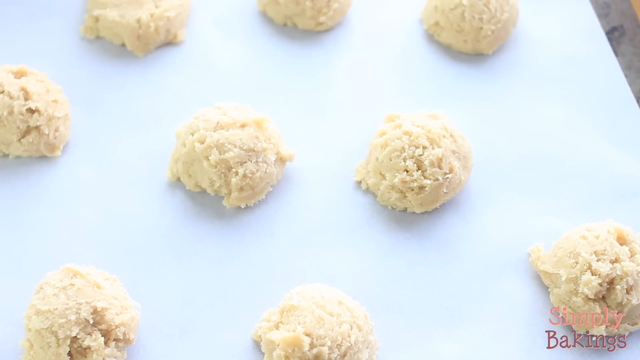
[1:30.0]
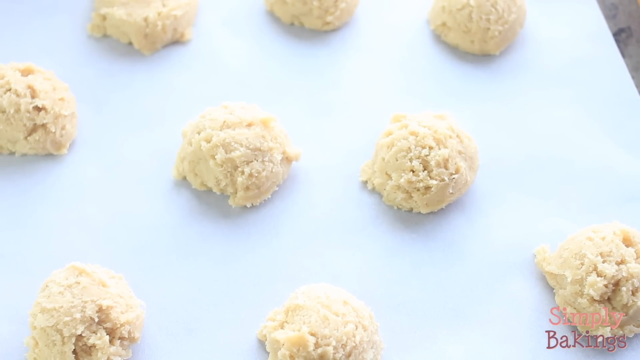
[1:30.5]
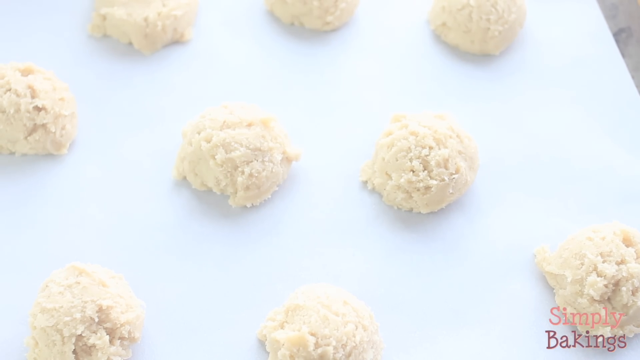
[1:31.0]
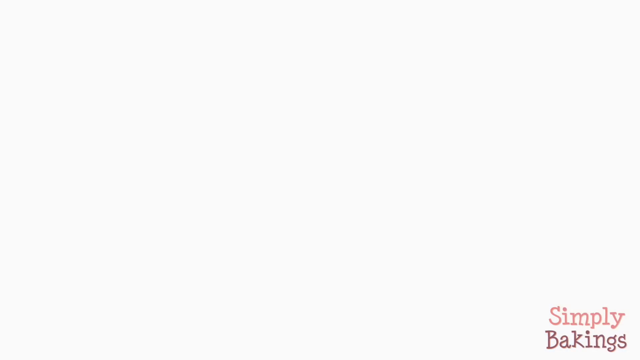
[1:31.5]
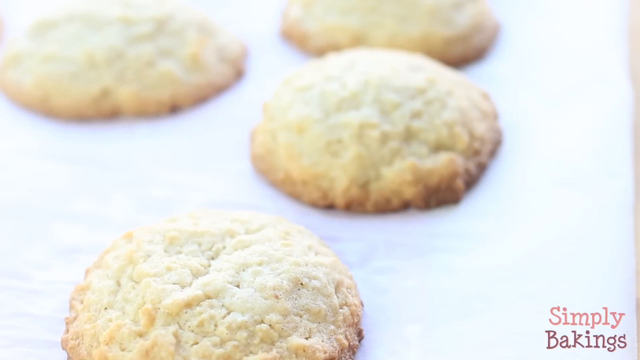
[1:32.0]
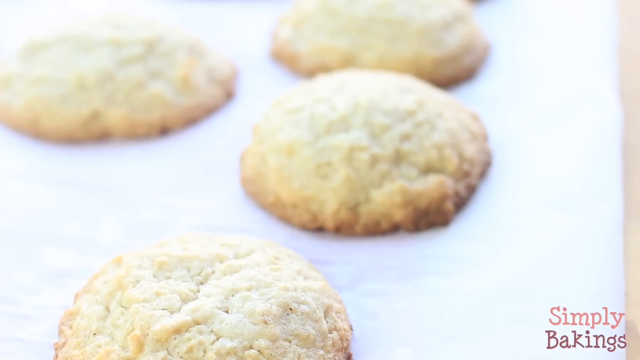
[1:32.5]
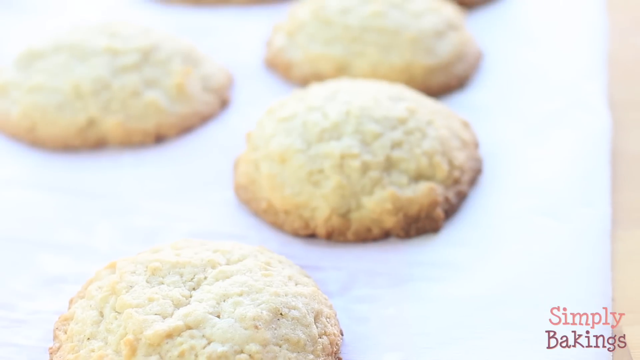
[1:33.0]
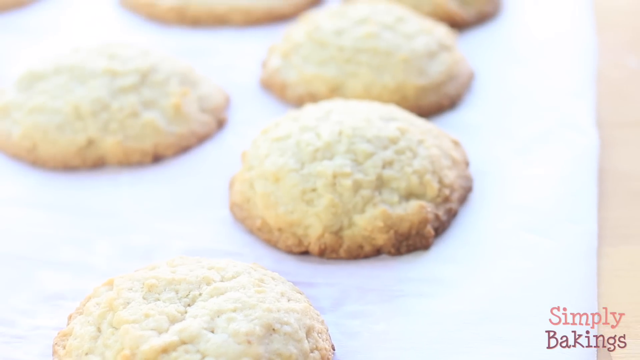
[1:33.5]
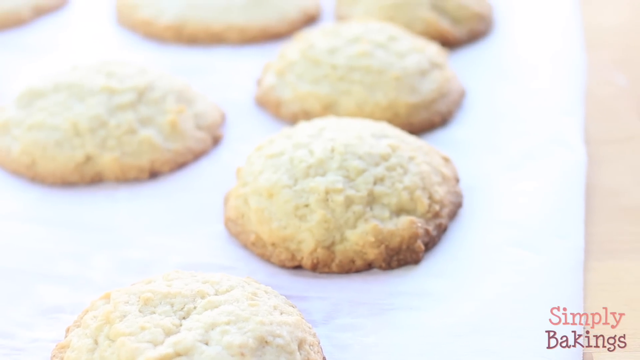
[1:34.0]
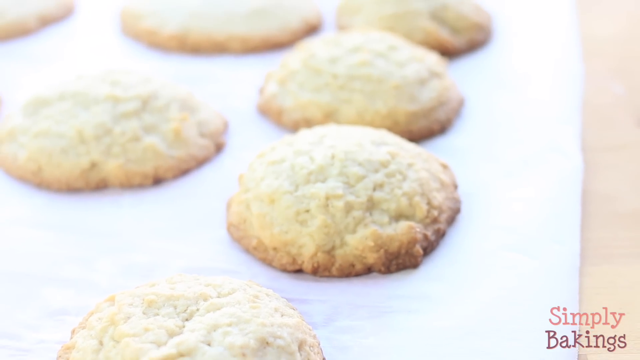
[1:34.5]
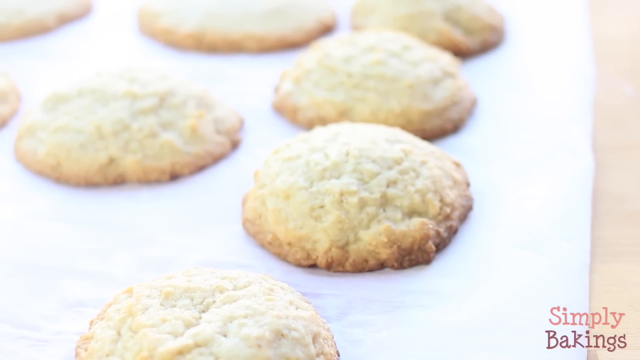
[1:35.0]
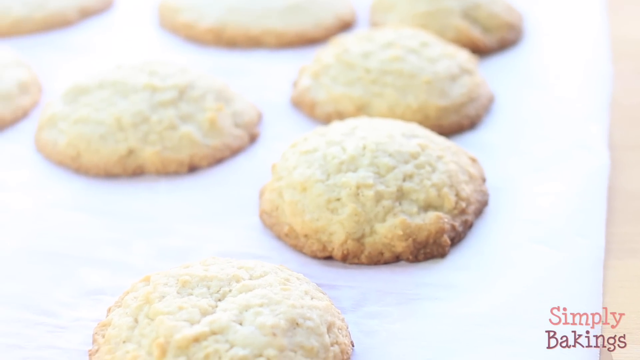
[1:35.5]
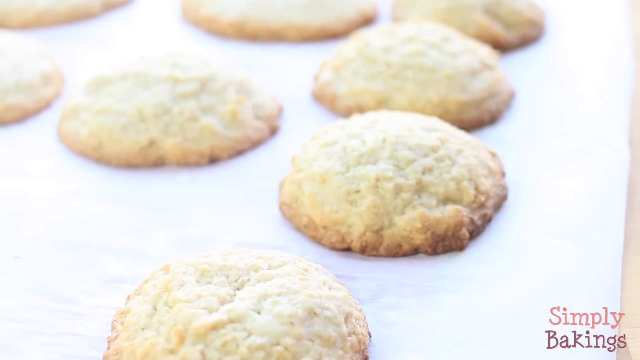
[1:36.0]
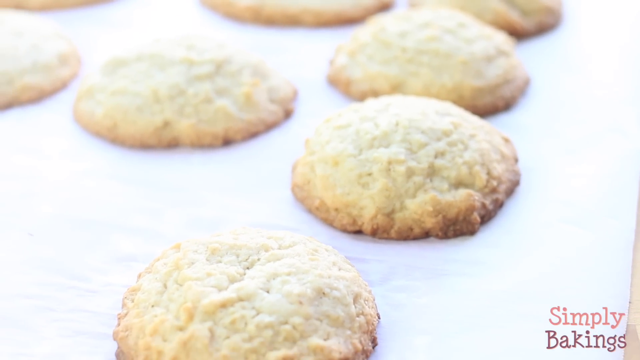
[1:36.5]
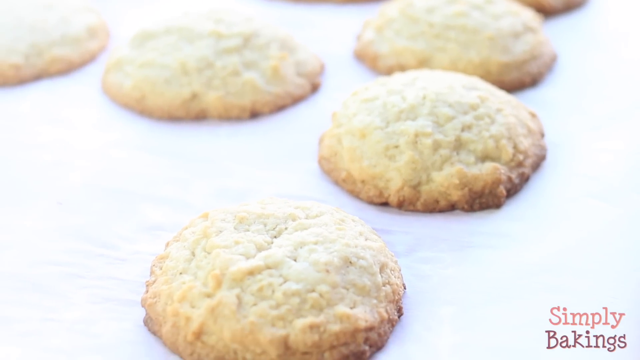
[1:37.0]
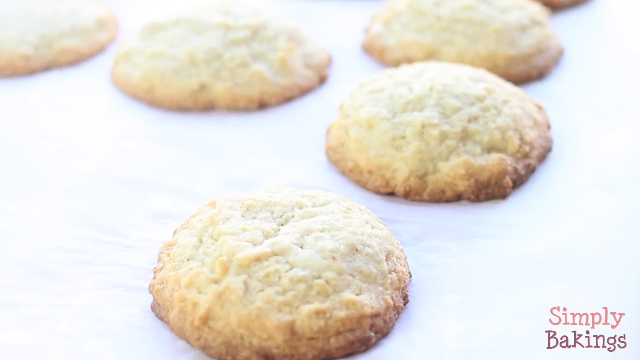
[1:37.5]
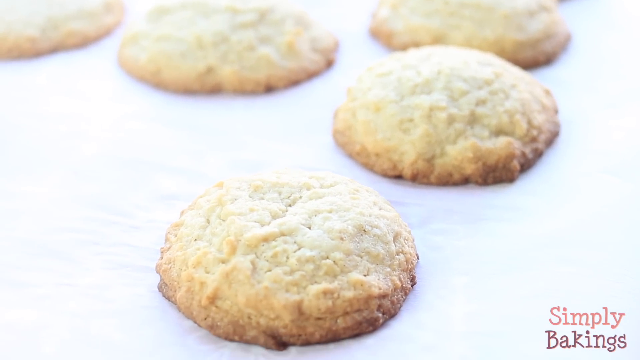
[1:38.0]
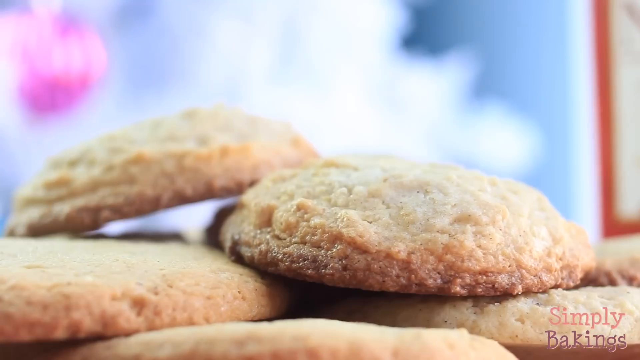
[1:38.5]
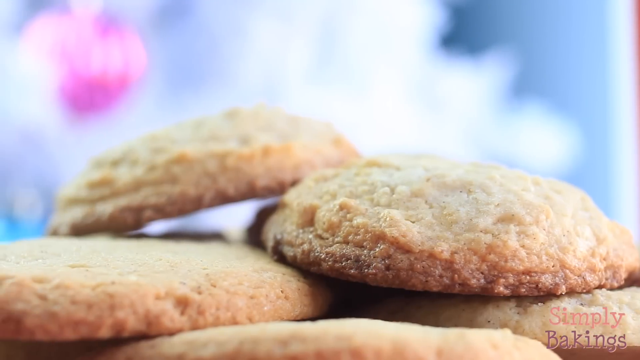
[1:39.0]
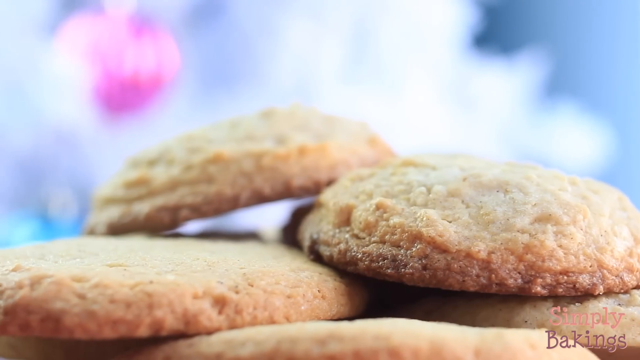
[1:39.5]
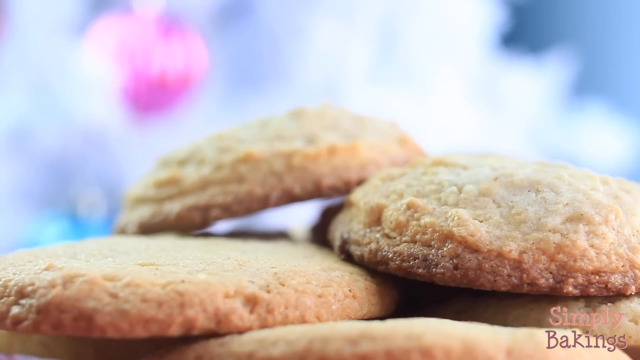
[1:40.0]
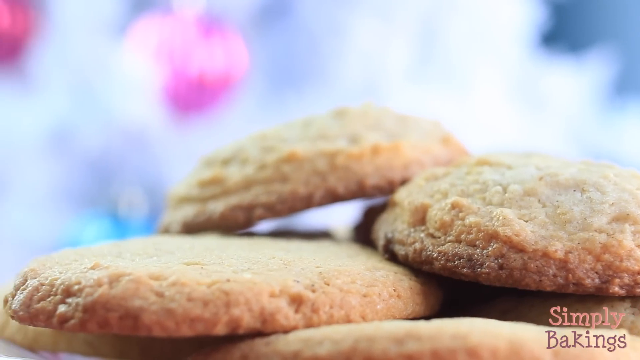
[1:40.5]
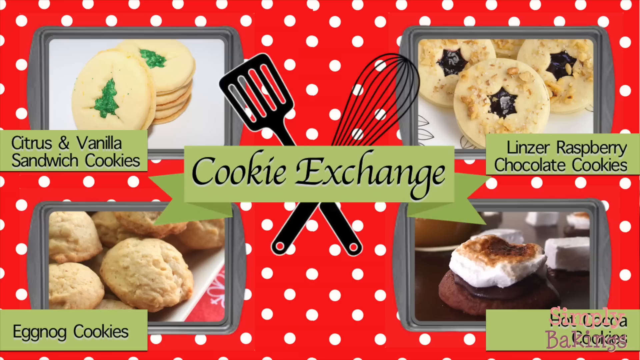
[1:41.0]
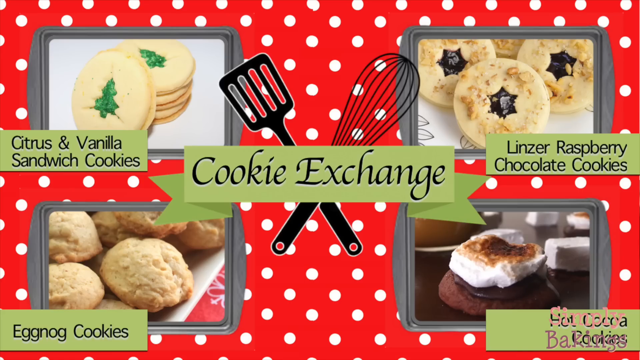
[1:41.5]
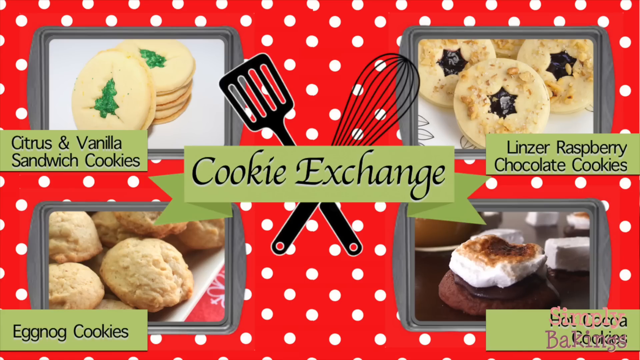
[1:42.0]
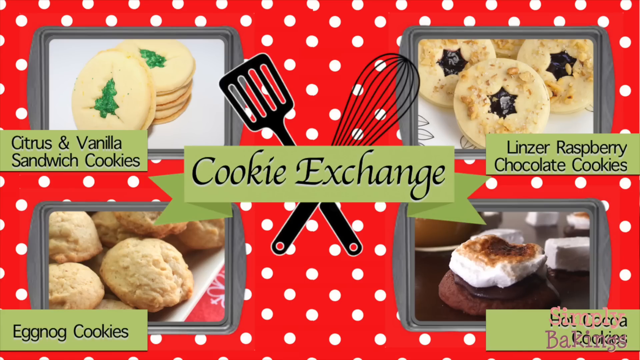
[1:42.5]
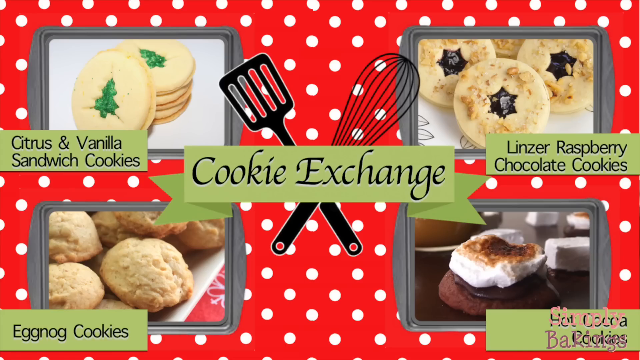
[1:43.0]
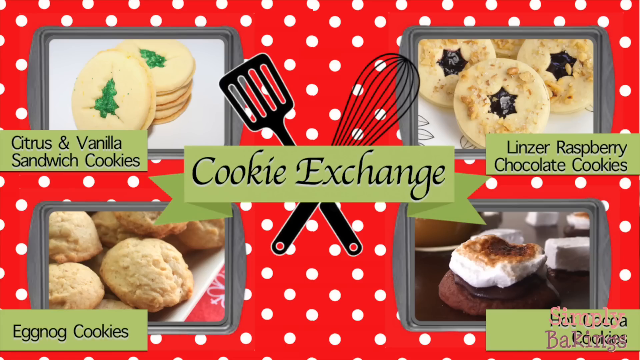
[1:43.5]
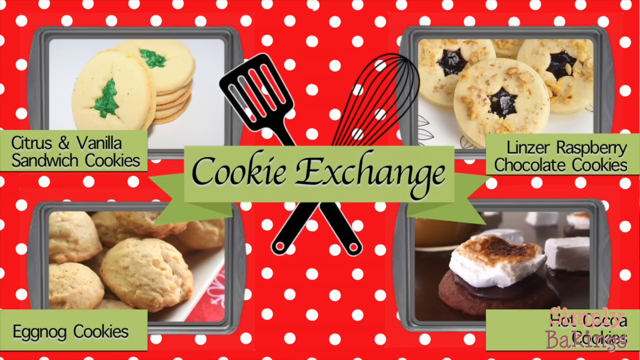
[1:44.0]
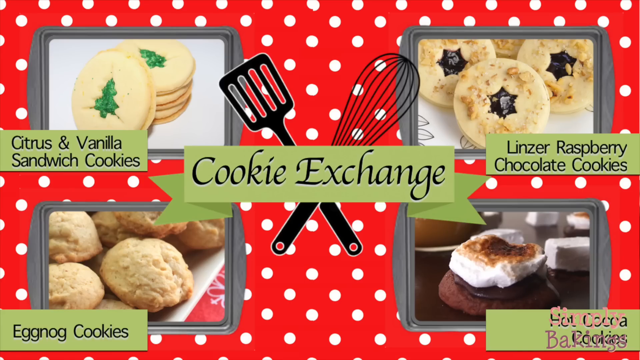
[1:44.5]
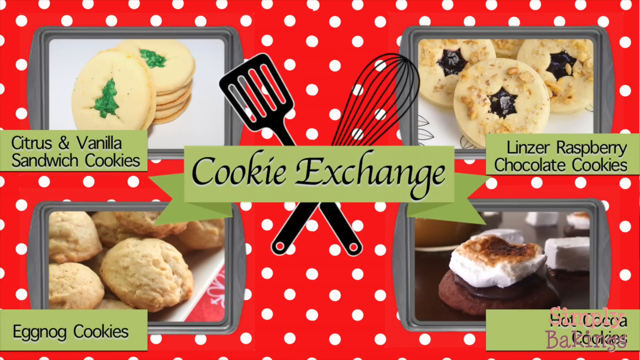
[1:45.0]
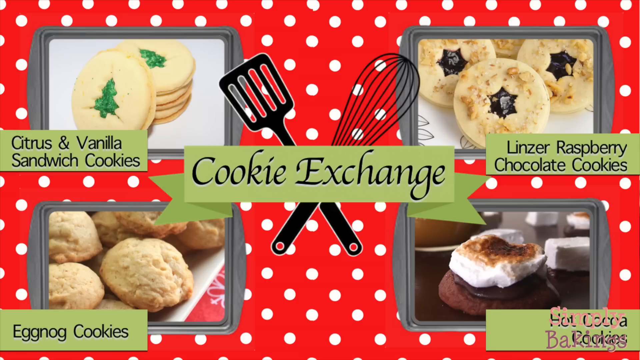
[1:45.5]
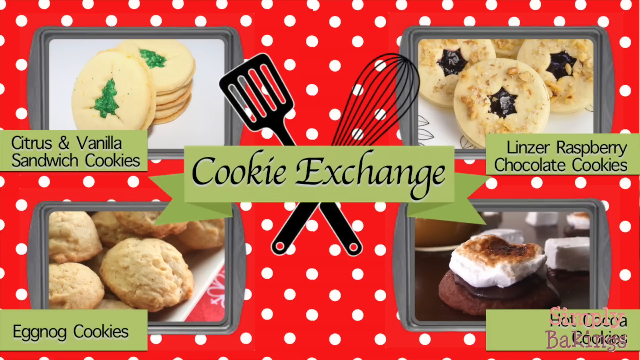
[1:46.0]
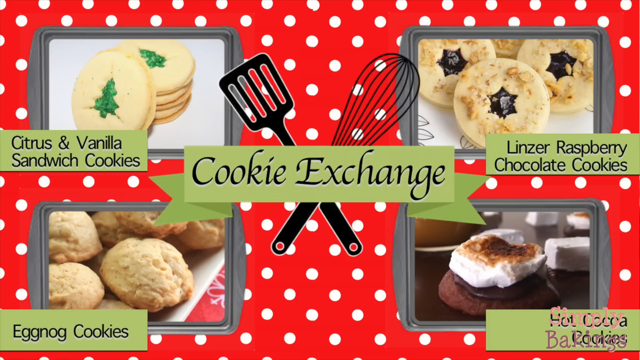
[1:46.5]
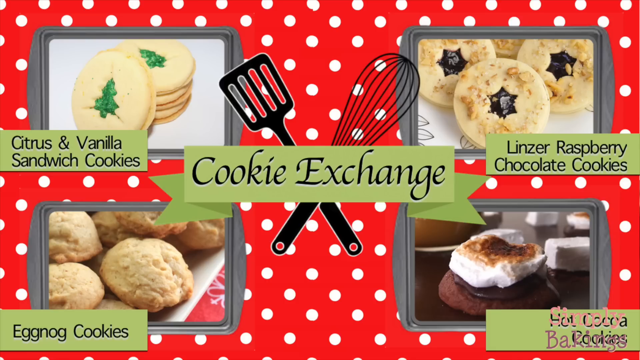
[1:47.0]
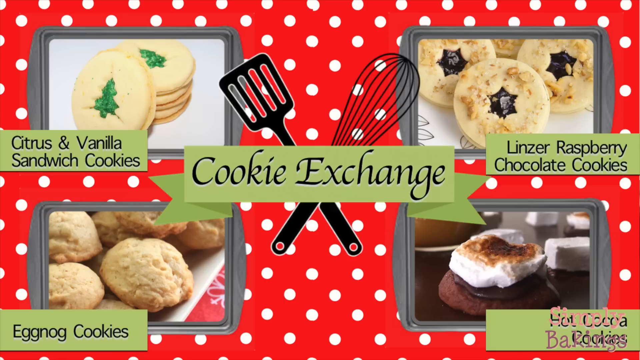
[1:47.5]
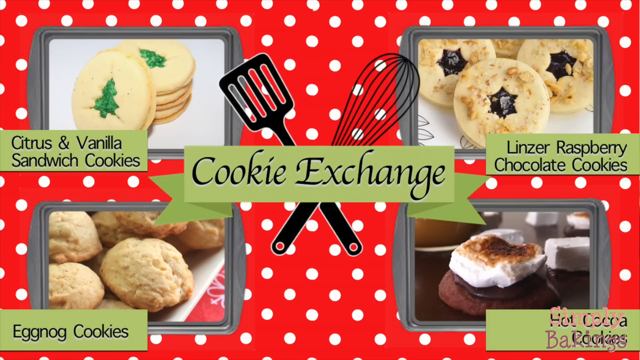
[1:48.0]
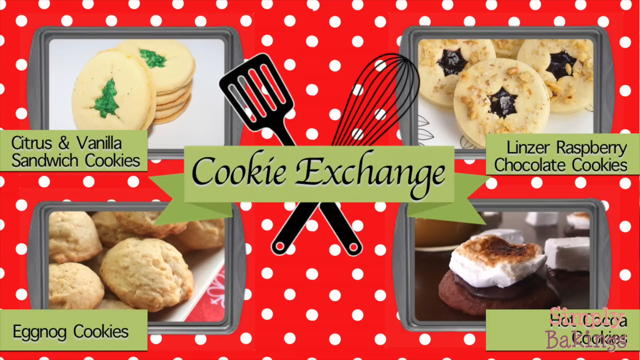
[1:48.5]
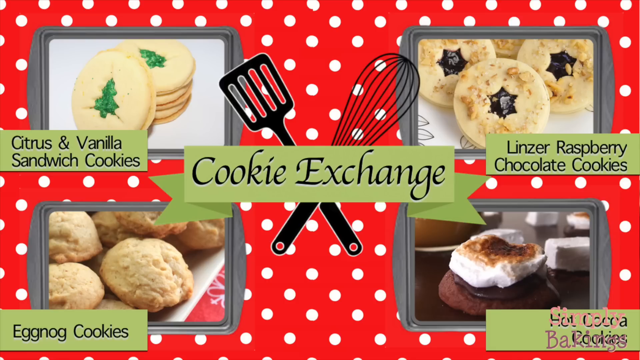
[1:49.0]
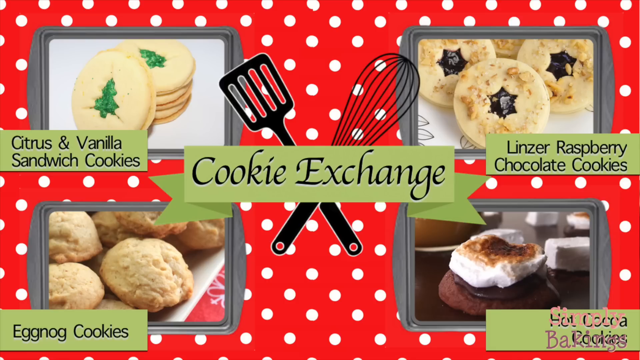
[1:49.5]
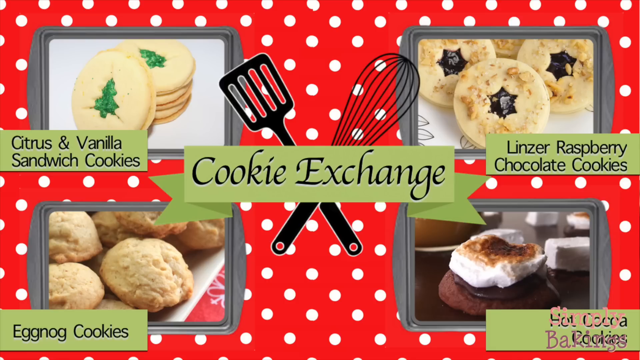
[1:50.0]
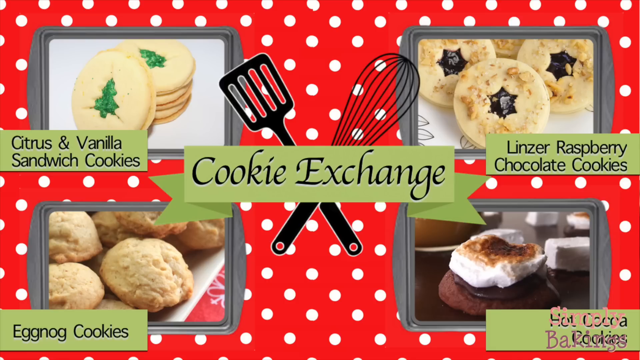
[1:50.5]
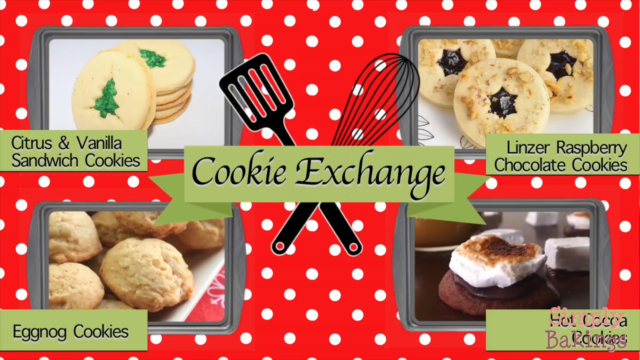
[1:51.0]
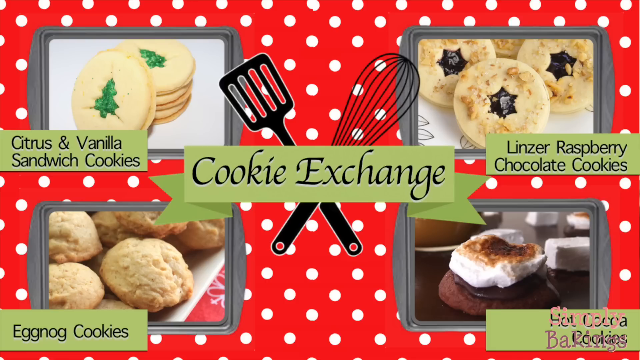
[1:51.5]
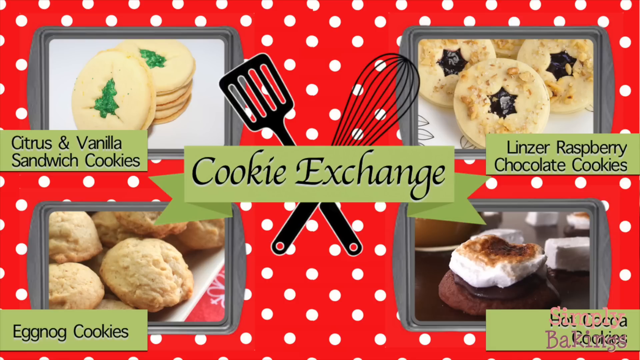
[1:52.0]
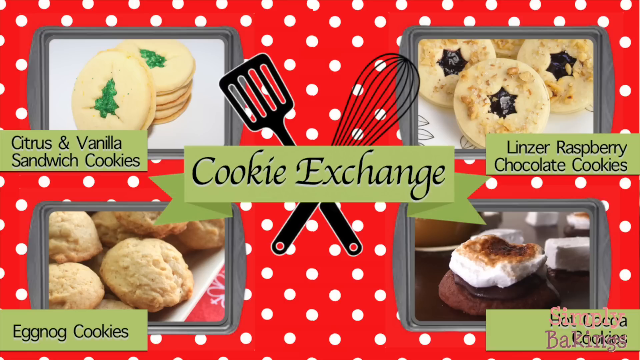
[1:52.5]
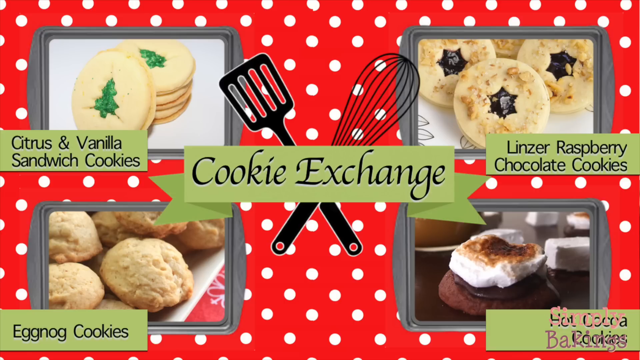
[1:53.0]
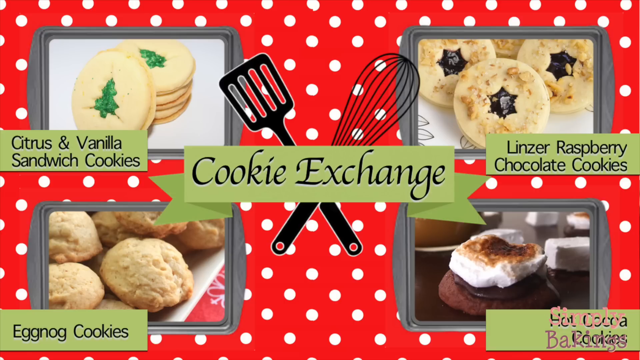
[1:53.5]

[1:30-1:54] Nine uncooked cookies are on a sheet; they are a soft, nude, whitish color, shaped into little balls, and evenly spaced. An up-close view then shows the finished cookies just out of the oven, with a golden hue around the edges, and they all look uniform in size and shape, their texture clearly visible. The view changes to the cookies off the baking sheet, stacked on top of each other, showing their details, toastiness and texture. Finally, the original cookie exchange page with all the different varieties of cookies they have baked is shown.